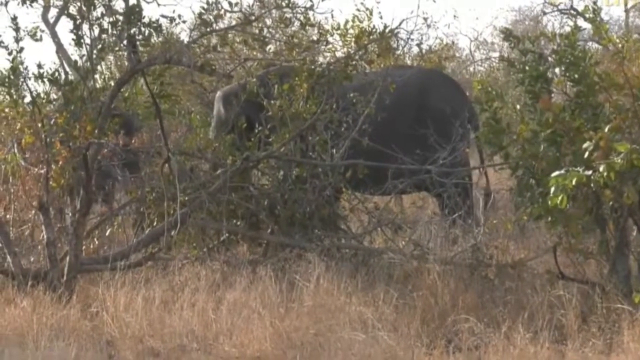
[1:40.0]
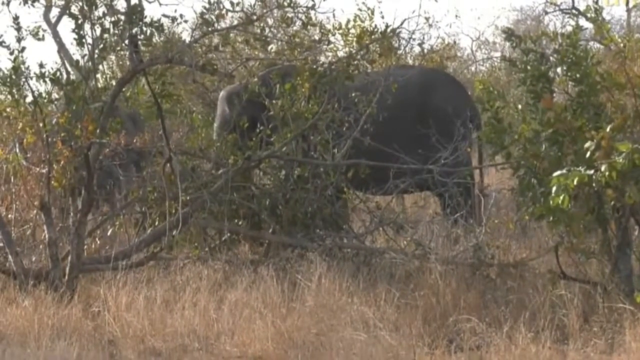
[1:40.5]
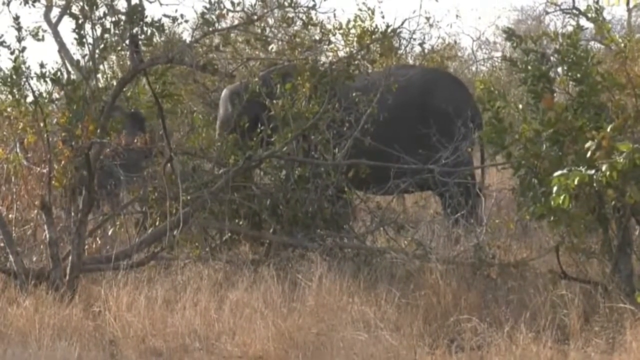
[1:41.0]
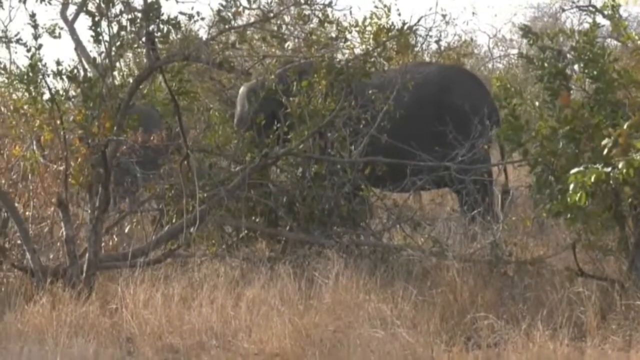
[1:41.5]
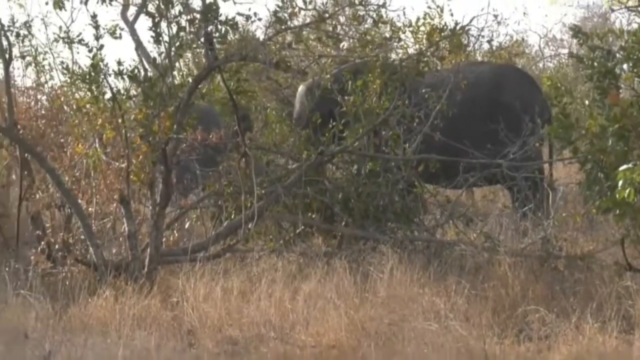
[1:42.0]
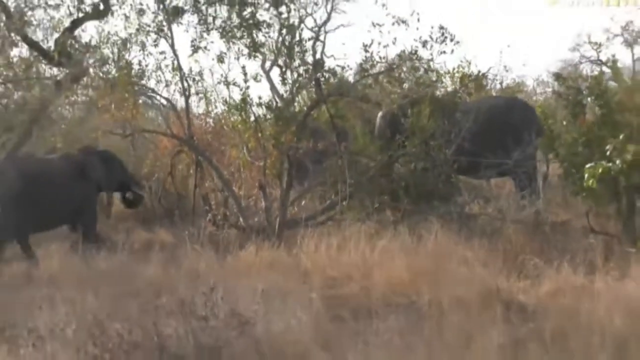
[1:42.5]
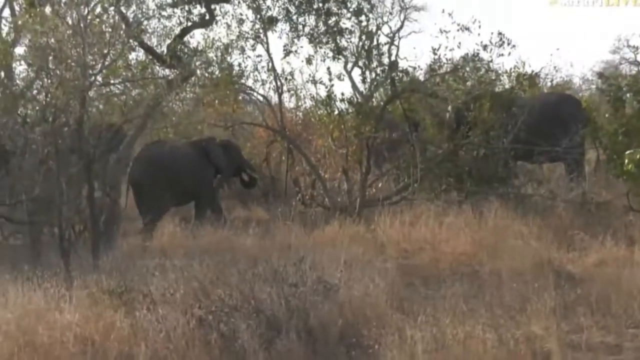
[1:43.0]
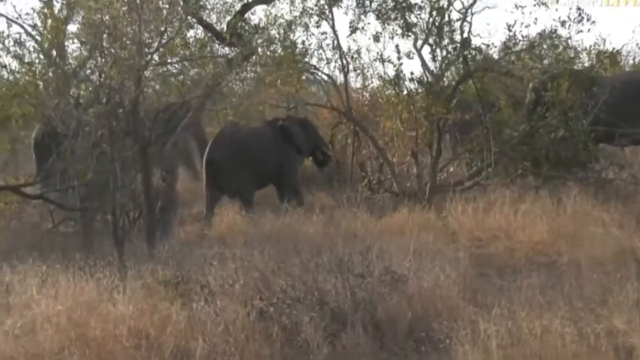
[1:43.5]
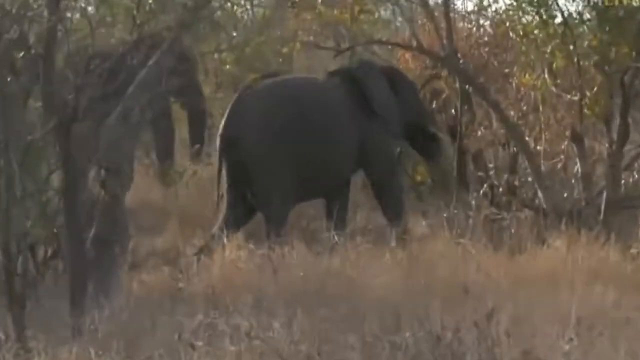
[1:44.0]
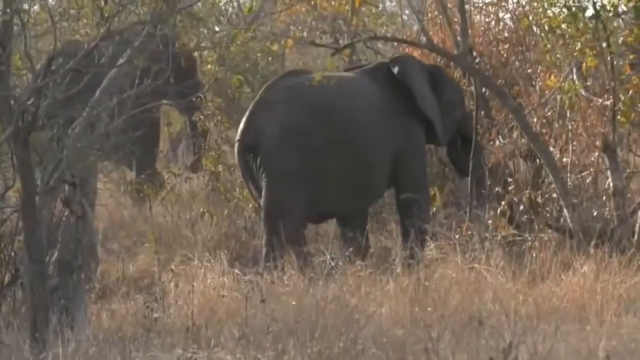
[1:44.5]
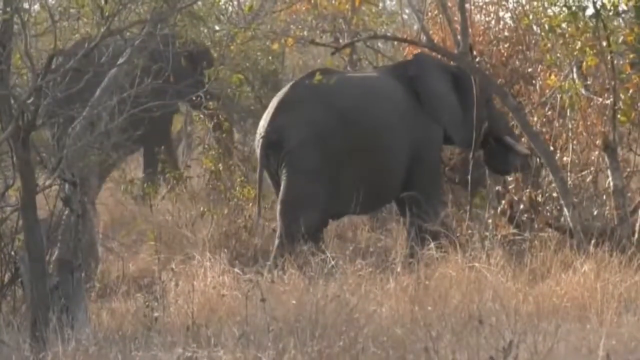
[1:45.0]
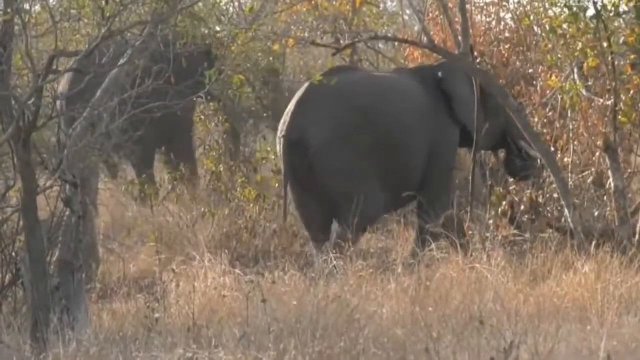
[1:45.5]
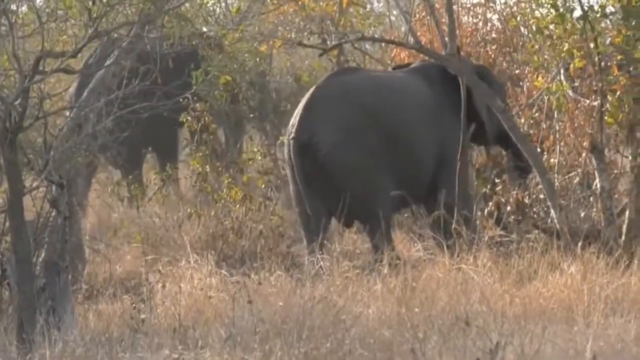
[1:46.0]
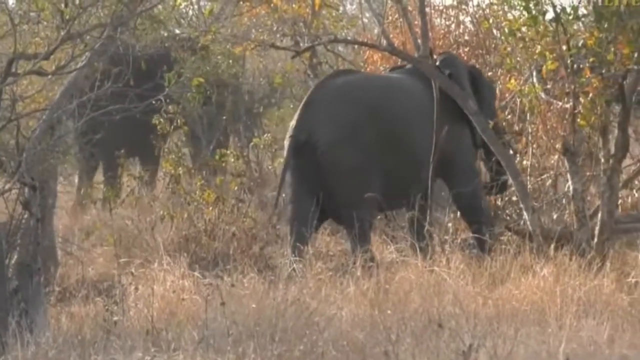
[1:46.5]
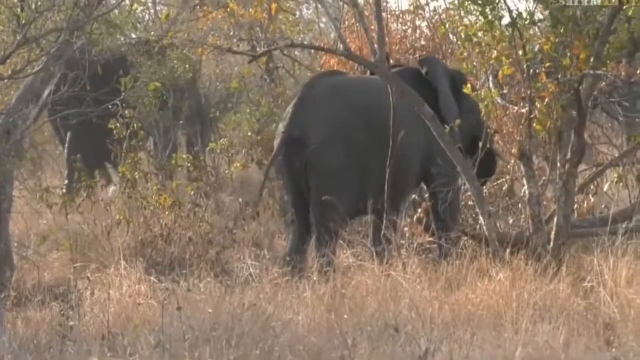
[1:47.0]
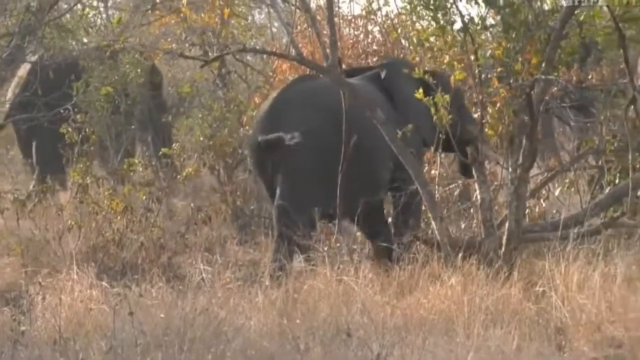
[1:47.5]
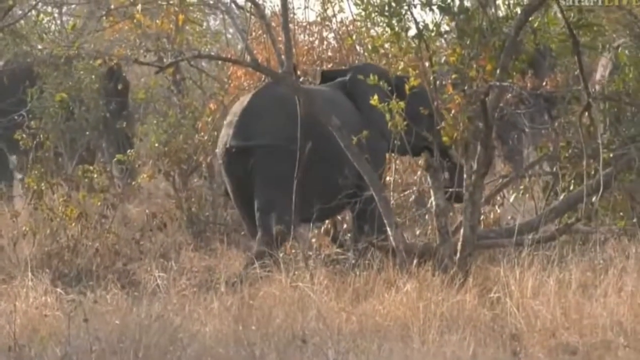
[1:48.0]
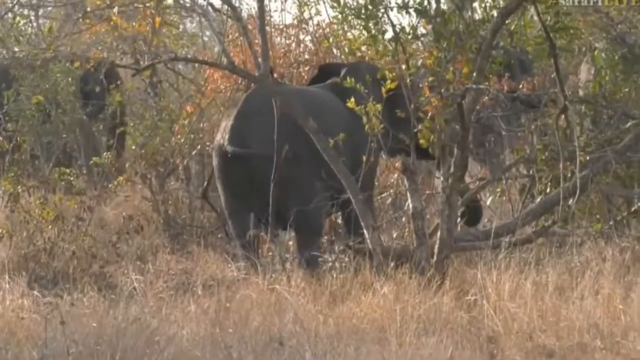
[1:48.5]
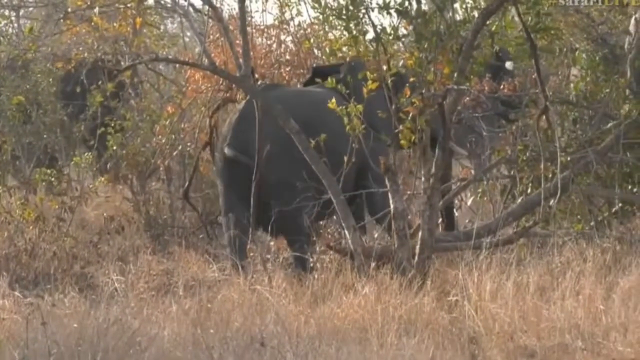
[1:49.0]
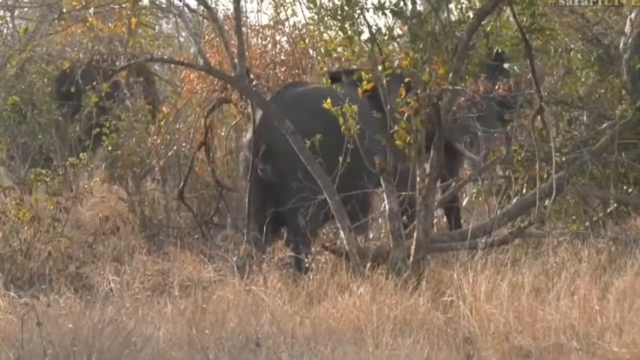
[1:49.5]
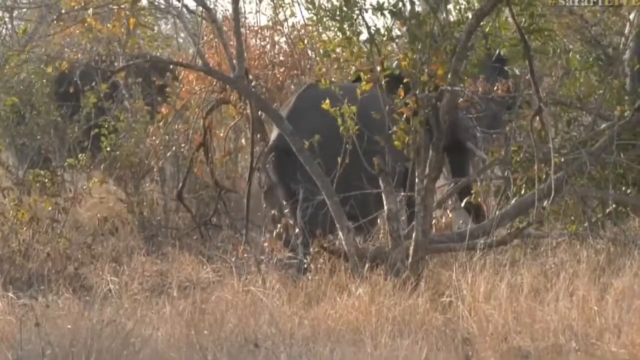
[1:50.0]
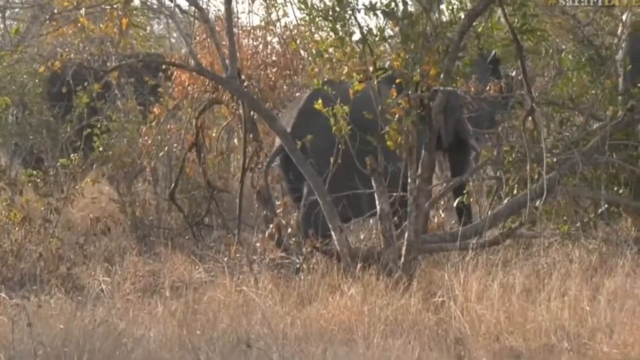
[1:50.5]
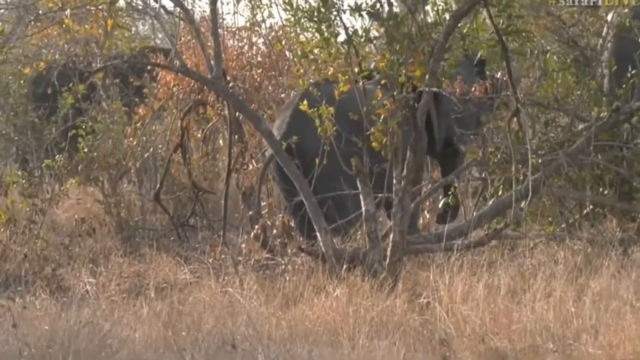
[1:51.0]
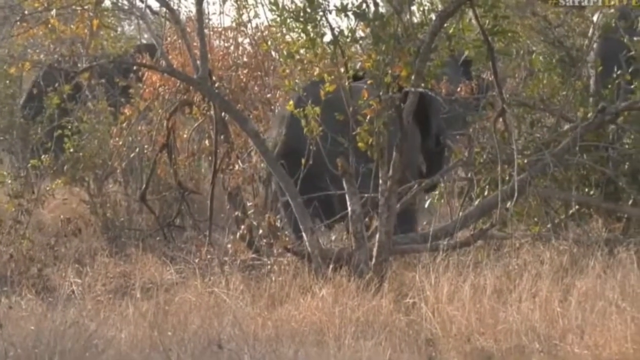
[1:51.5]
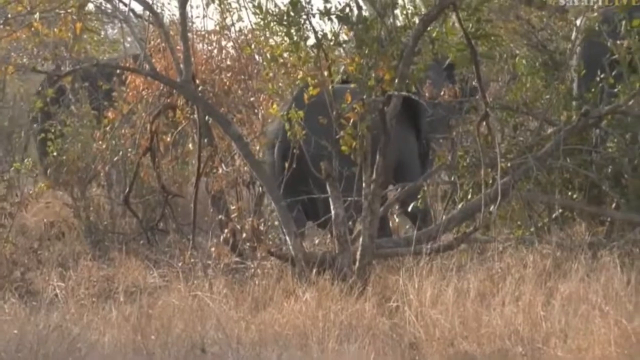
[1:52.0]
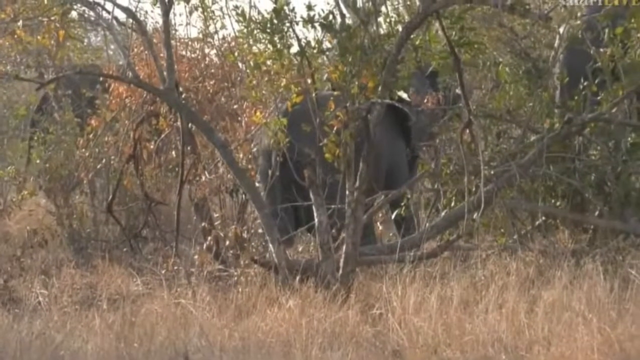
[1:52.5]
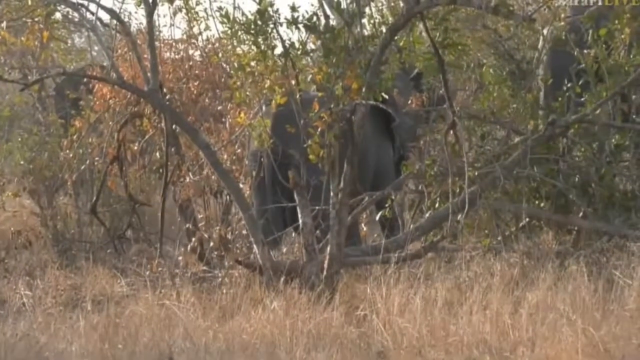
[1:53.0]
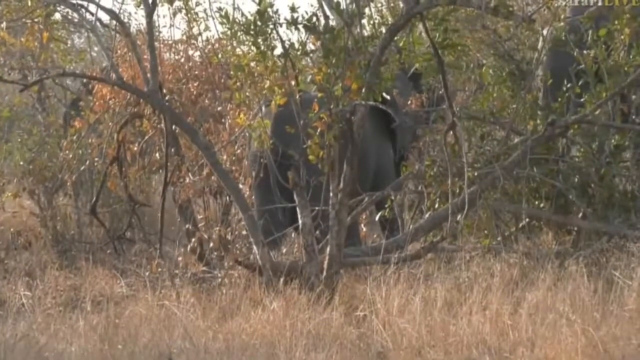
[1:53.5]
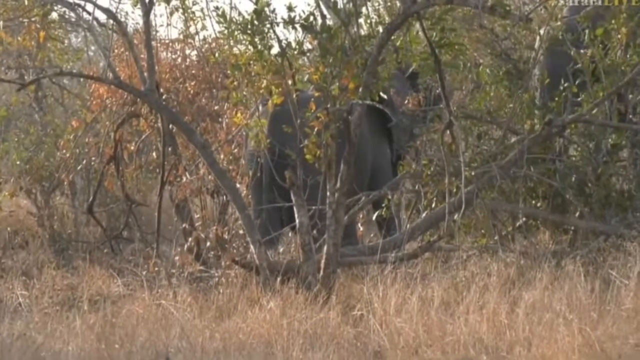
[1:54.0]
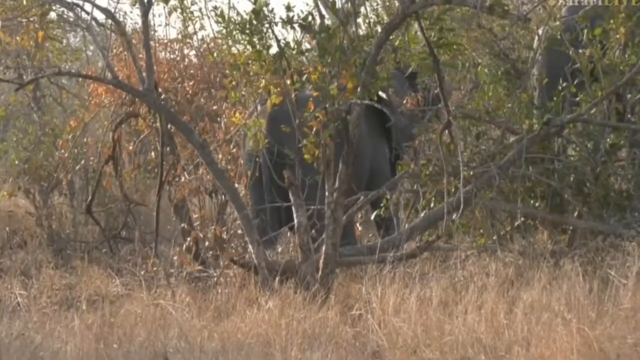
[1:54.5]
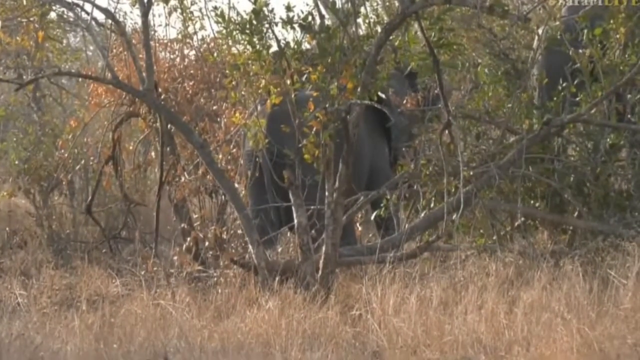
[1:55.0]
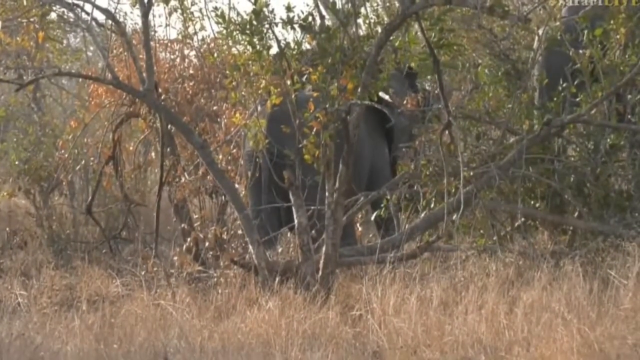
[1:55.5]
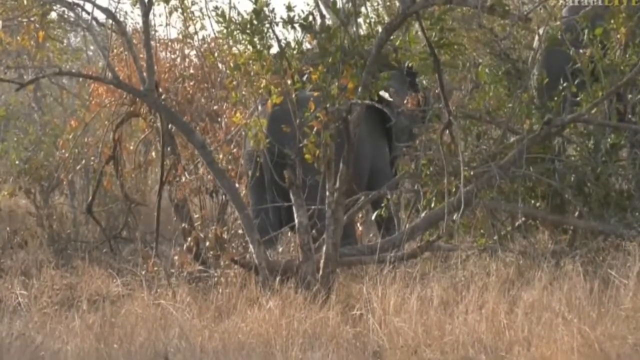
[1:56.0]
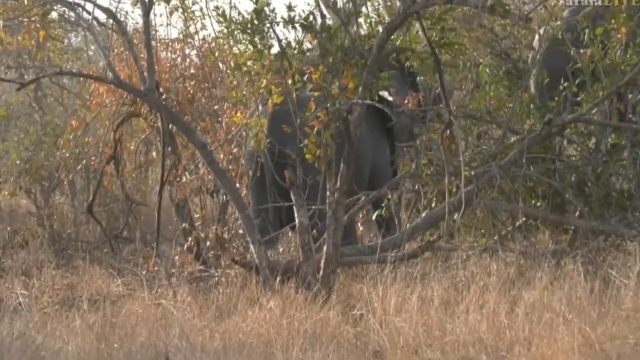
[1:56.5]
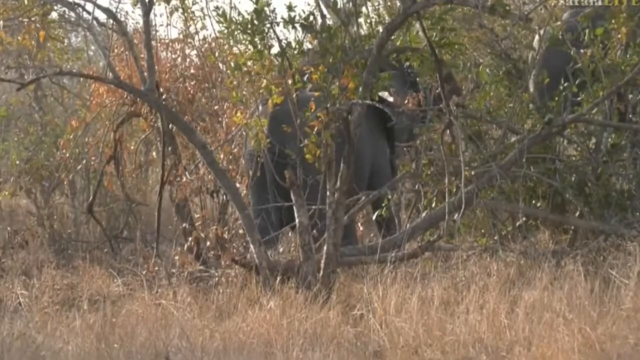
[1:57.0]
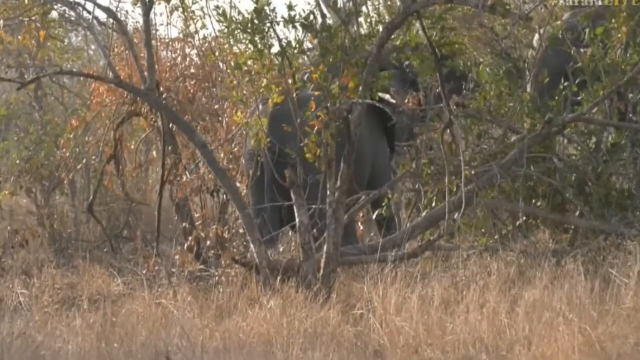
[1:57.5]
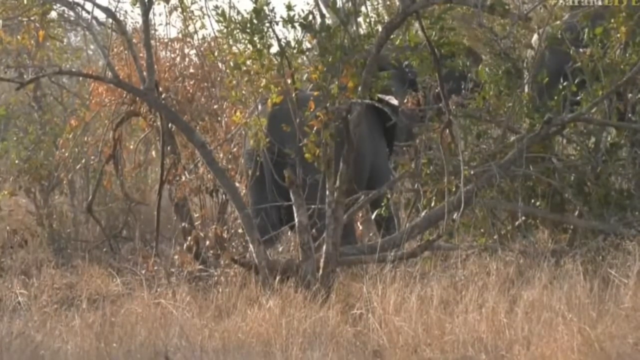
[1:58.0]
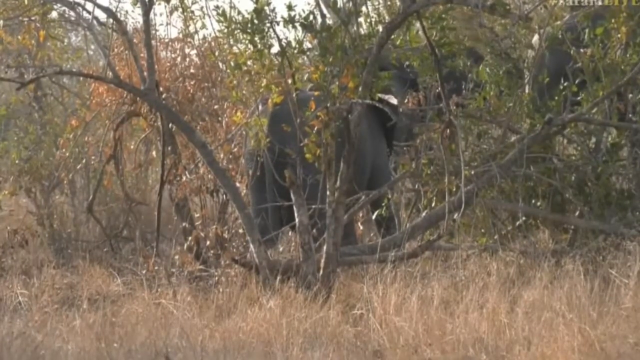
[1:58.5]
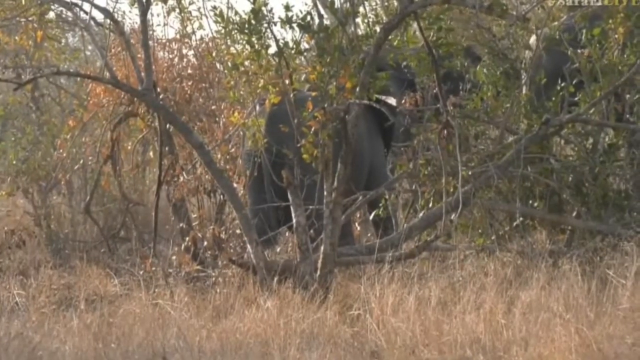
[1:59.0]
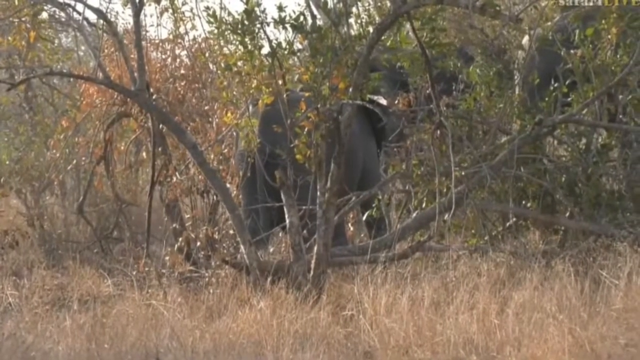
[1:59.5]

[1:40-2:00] The elephants are standing stationary in an area. One visible elephant moves its tail very slightly; it almost looks like the wind is blowing it, but the elephant appears to move it on its own. The camera magnifies another elephant that appears younger, with a big belly, looking well fed, and a small tusk visible from the side that looks like it is just growing in. Its tail slowly swings in opposite directions. It walks over, its trunk holding something that it brings up to its mouth, then stays stationary, seemingly continuing to eat there.